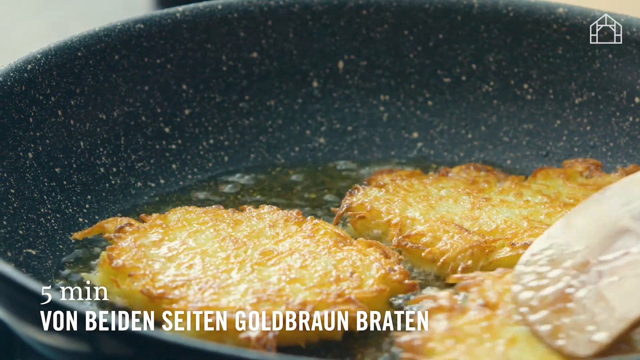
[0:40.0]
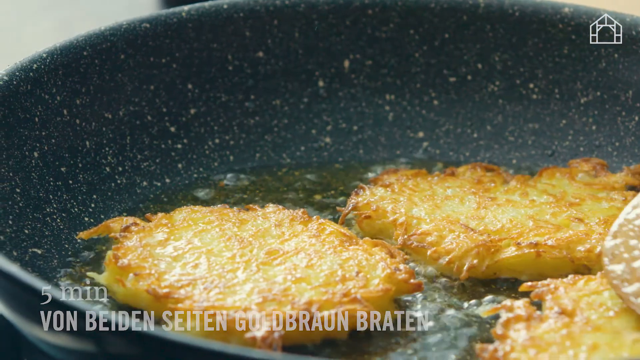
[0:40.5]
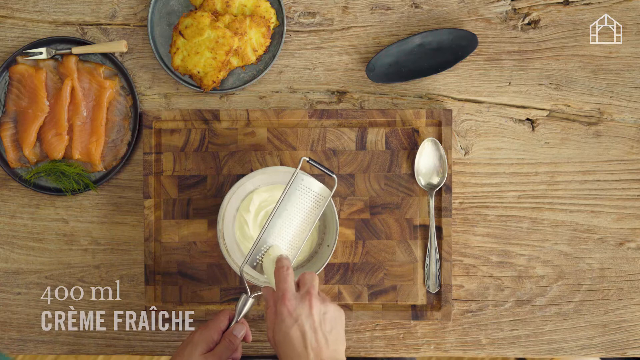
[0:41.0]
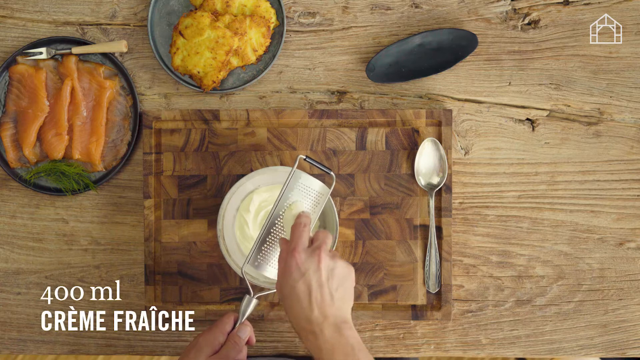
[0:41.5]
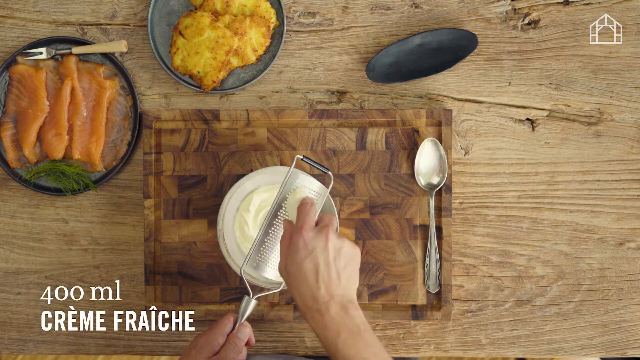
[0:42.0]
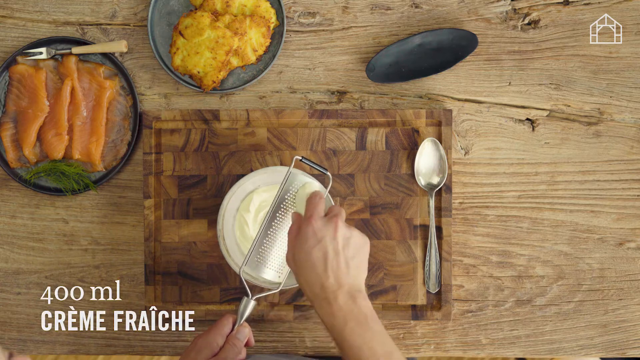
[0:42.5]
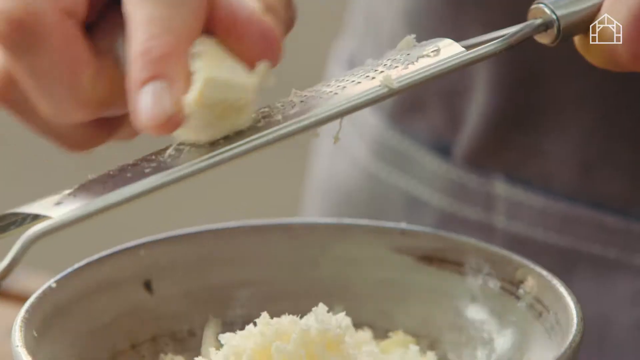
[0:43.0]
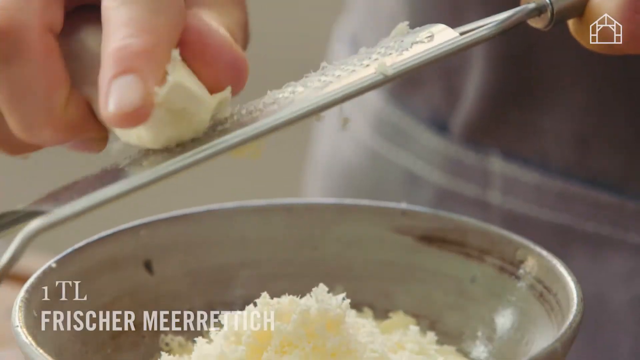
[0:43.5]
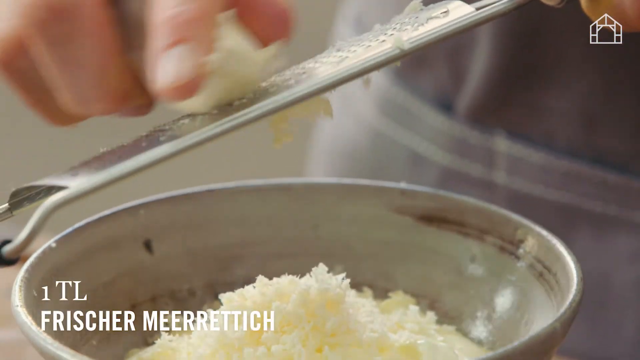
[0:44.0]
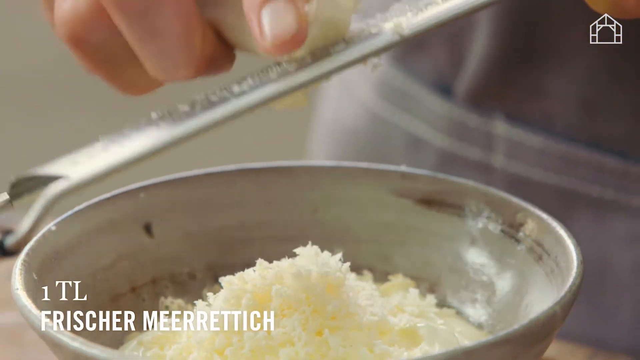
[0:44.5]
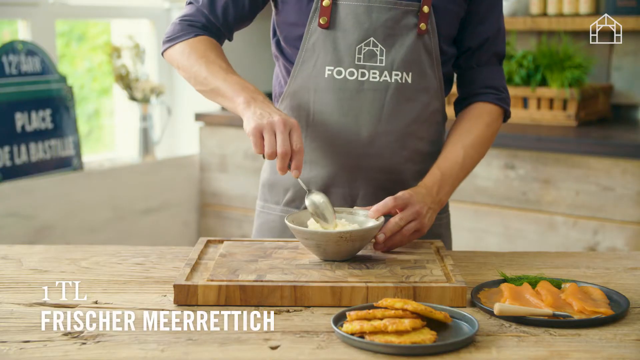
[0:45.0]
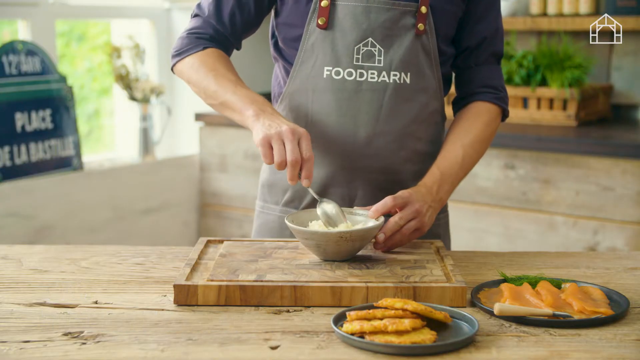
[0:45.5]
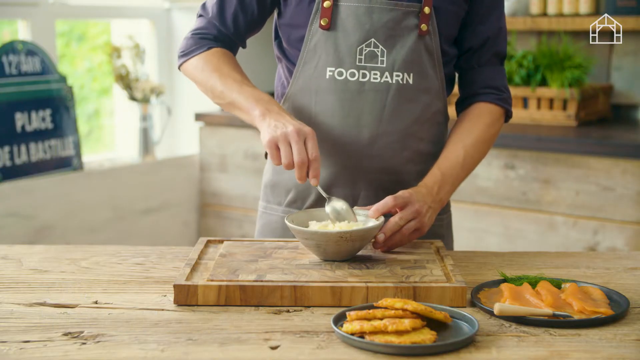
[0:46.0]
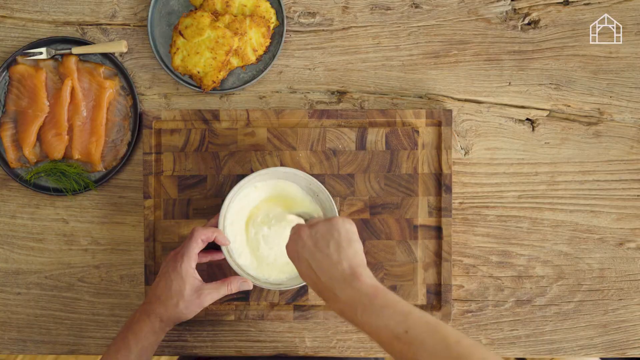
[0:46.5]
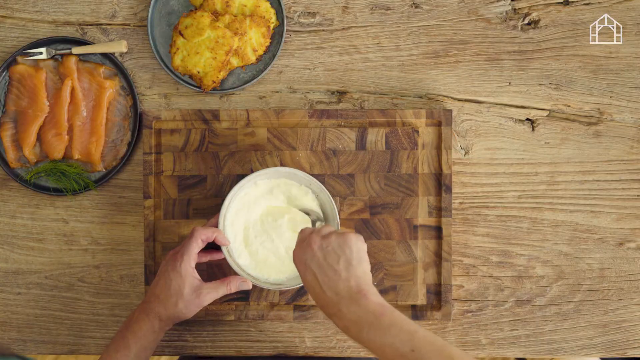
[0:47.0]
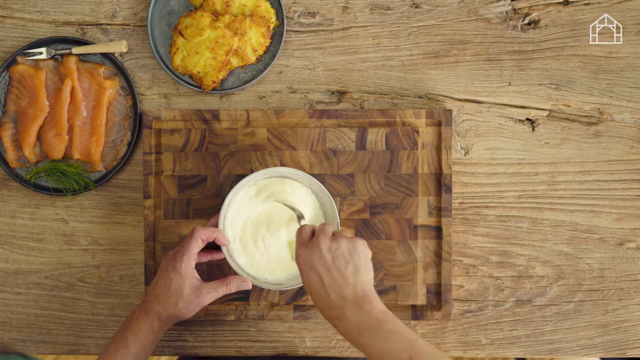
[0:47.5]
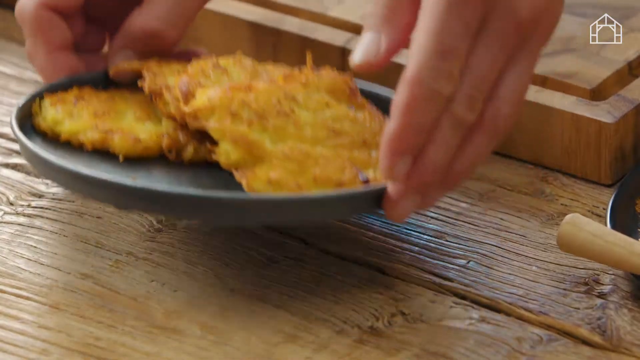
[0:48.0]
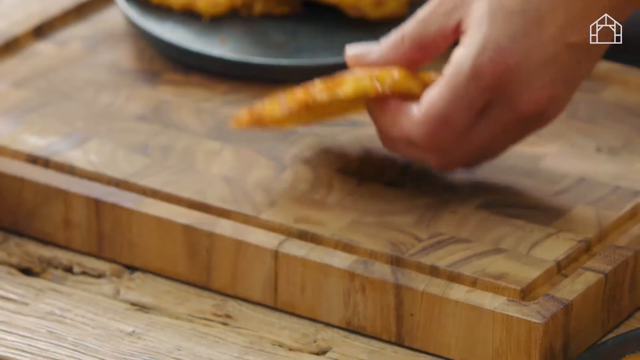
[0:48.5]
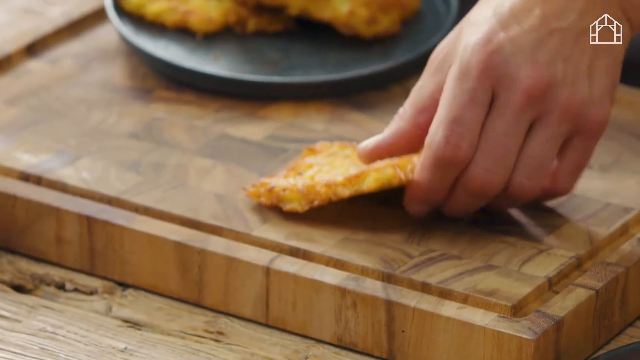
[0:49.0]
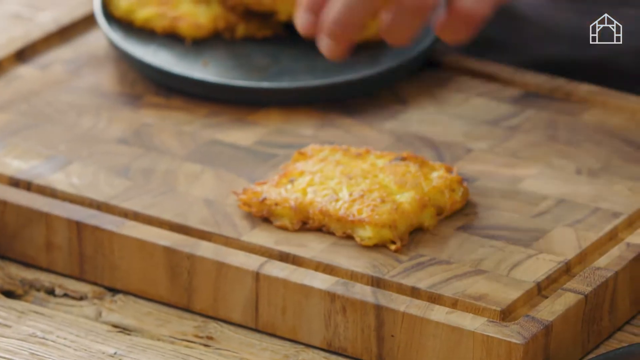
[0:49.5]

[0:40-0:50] Text reading "5 minutes" appears along with German words. The three pancakes in the frying pan look golden brown, very briefly. The video cuts to an overhead shot of a wooden cutting board on a wooden table or counter, with the pancakes toward the top of the screen and something else to the left. A hand is over a grater that is over a bowl, and on-screen text says "400 ml of creme fraiche"; the white substance in the bowl is apparently creme fraiche. An unidentified ingredient is shredded or grated into it and stirred in with a metal teaspoon. The hands then pick up the plate of potato pancakes, set one pancake on the plate, and put a dollop of the creme fraiche mixture on top of it.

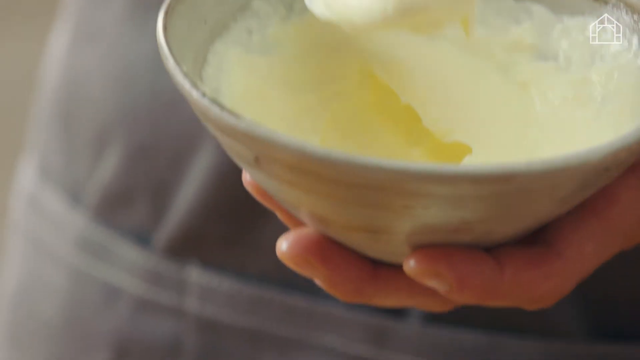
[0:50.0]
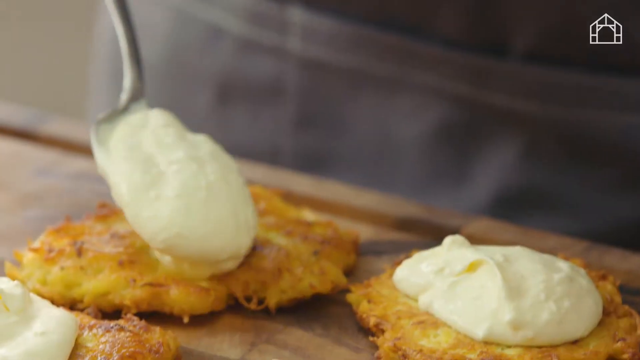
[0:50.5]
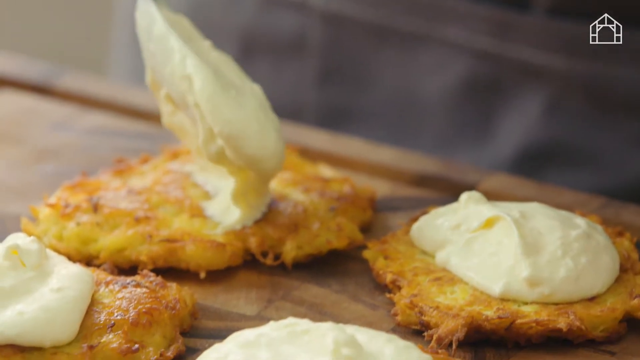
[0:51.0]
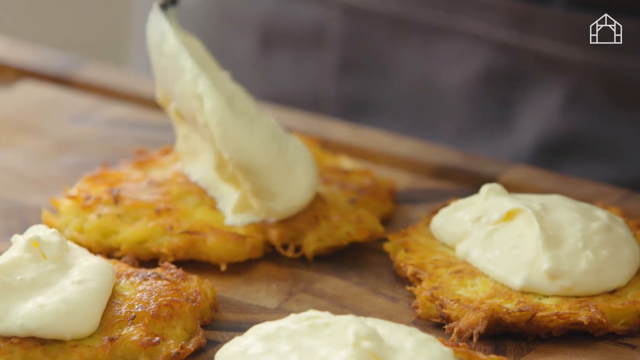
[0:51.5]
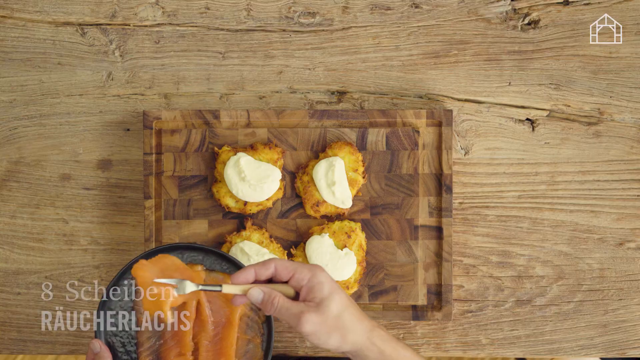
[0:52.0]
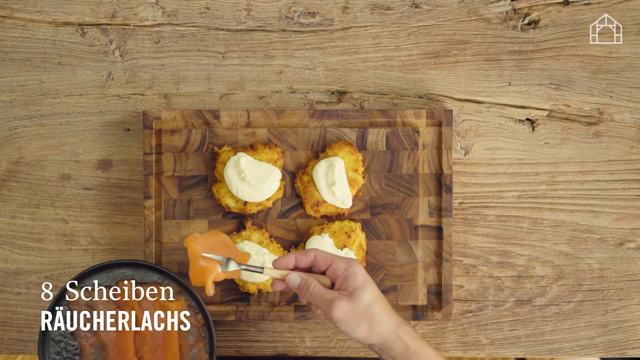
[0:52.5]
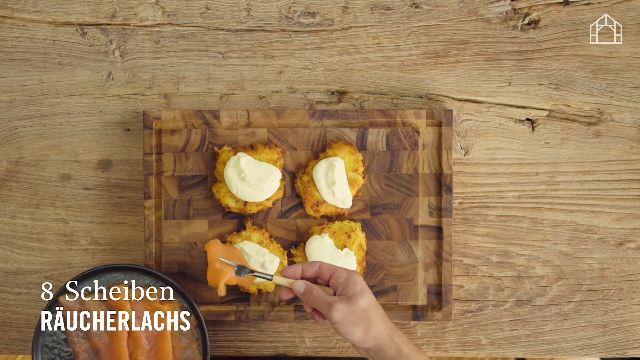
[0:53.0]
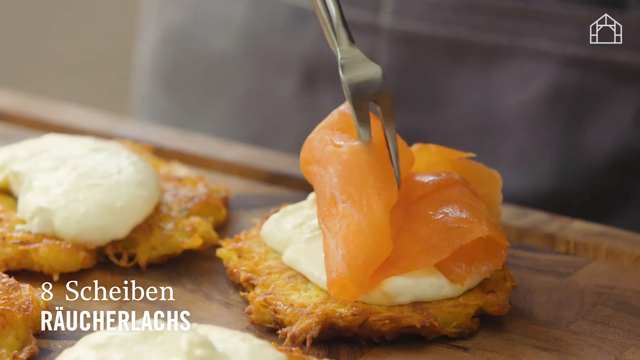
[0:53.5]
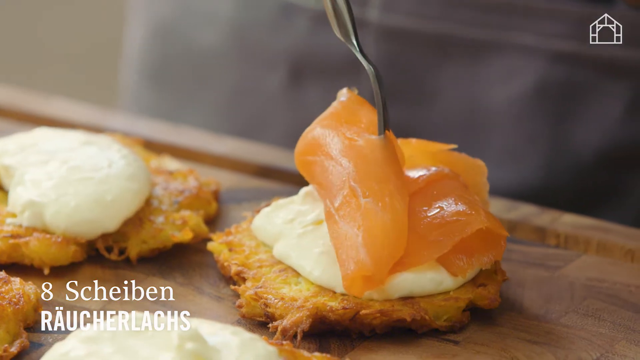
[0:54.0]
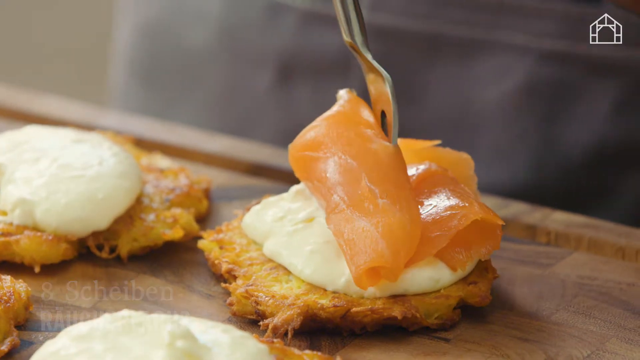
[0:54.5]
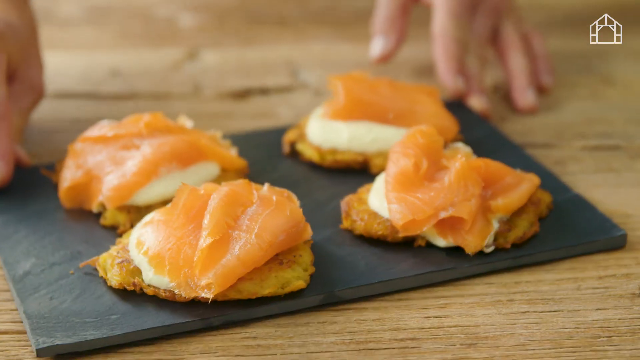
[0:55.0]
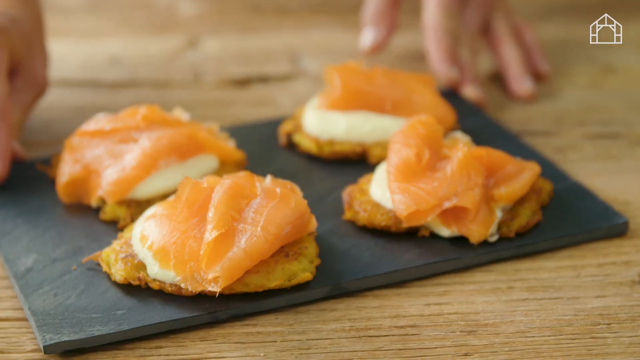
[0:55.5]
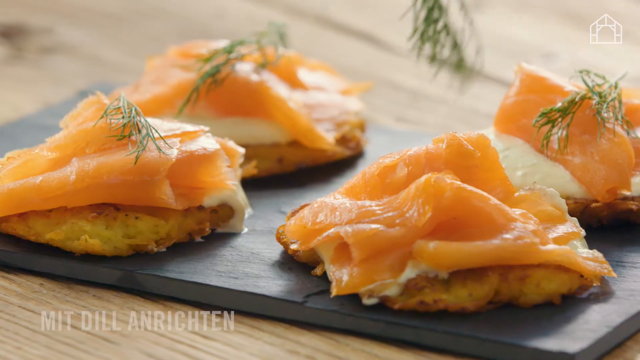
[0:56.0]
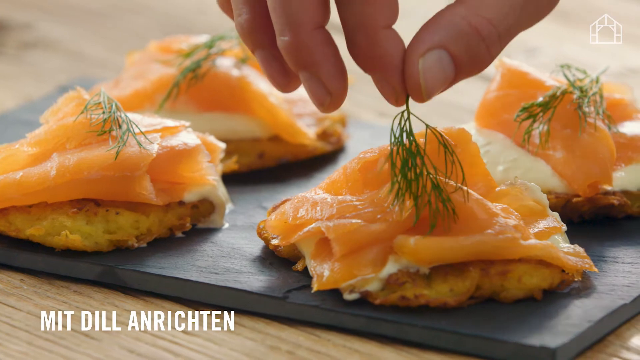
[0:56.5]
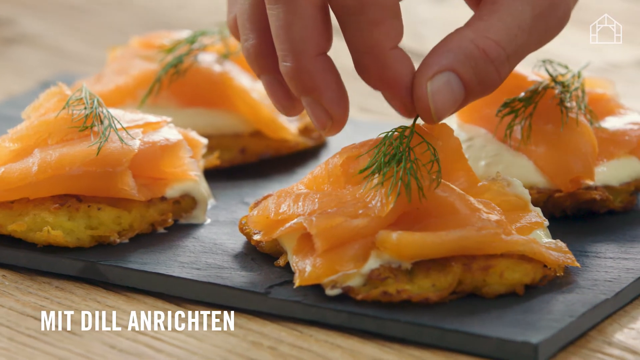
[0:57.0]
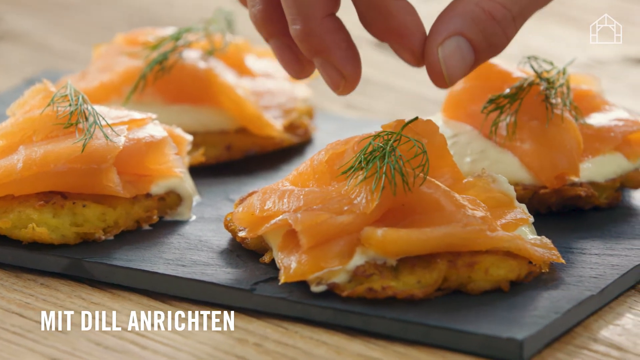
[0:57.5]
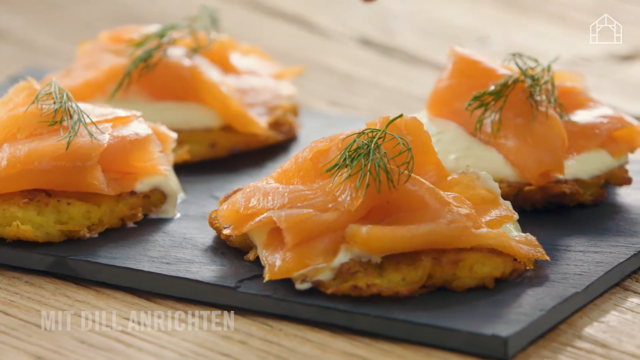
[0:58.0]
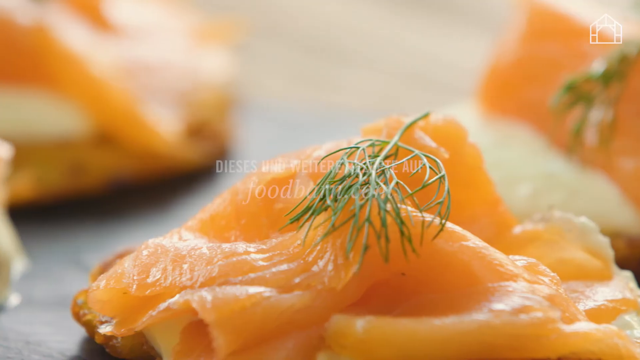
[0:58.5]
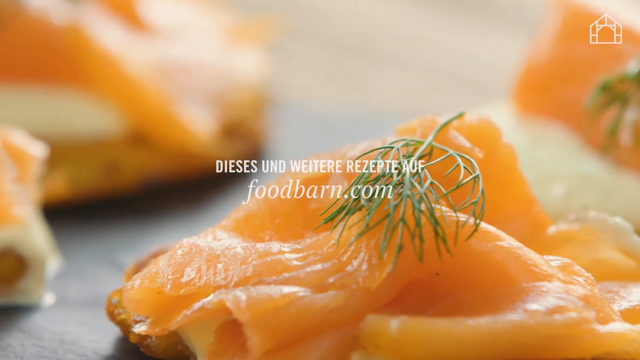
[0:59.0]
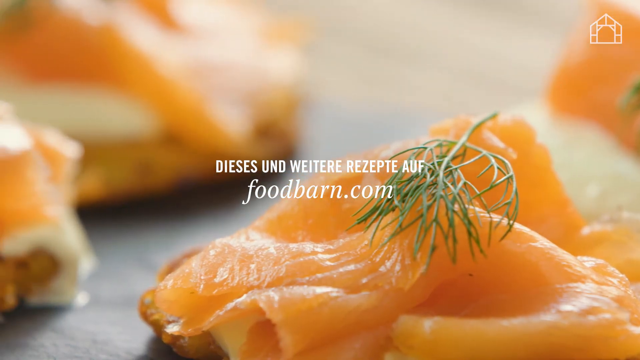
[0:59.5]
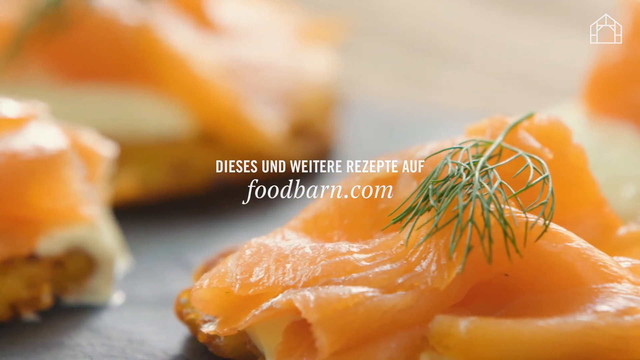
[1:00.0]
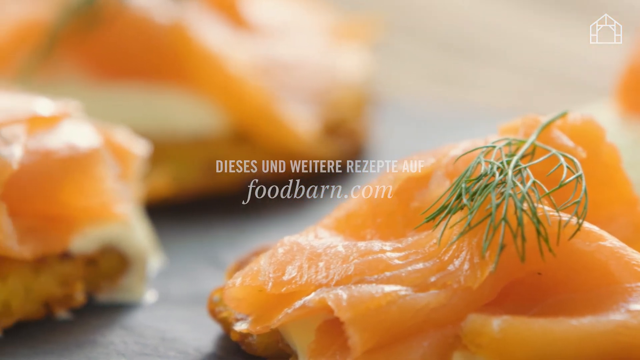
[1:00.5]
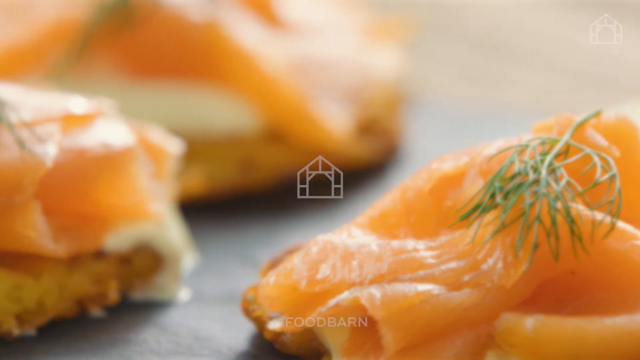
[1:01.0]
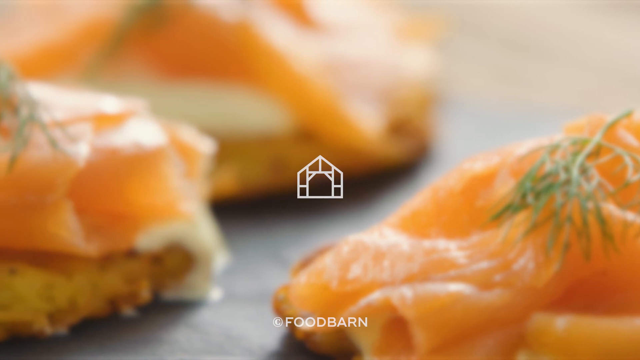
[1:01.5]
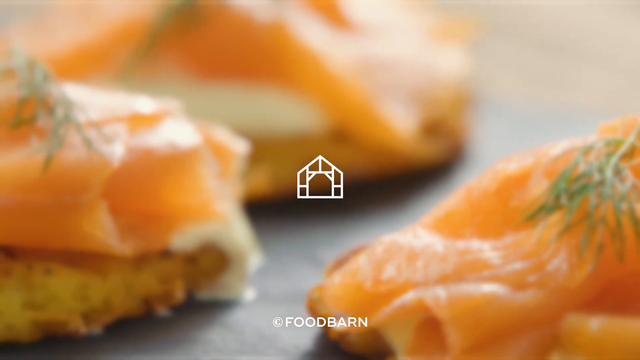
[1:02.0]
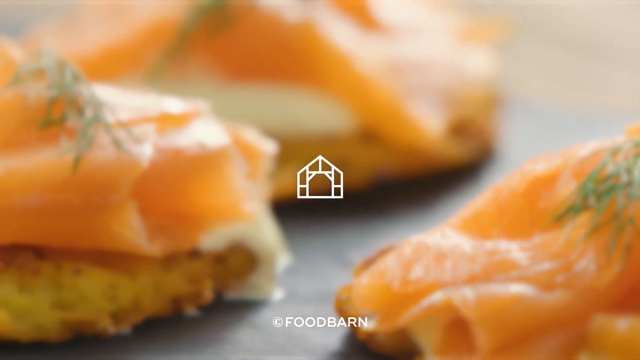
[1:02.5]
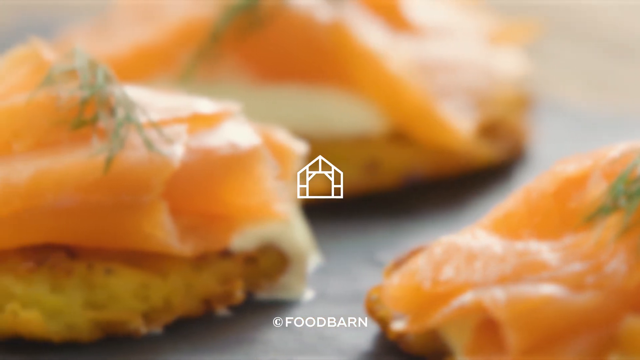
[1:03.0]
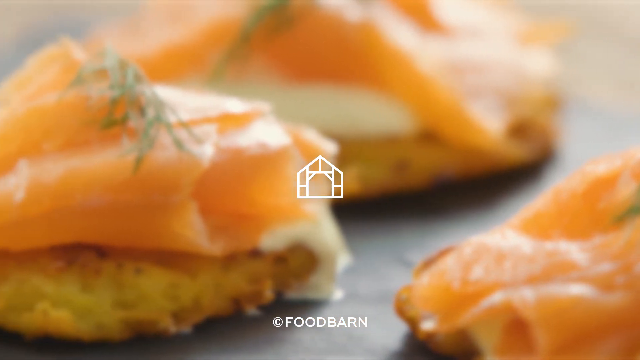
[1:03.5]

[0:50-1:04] All four pancakes are on the cutting board, each topped with a dollop of the creme fraiche mixture. A hand uses a small fork to put a slice of what looks probably like lox or another thinly sliced fish on top of each pancake, on the dollop of creme fraiche. Each is then topped with a sprig of dill. Something appears, probably text saying to find the recipe, go to foodbarn.com, along with a close-up of the potato pancakes. The background starts to get blurry while the Food Barn logo is shown clearly.